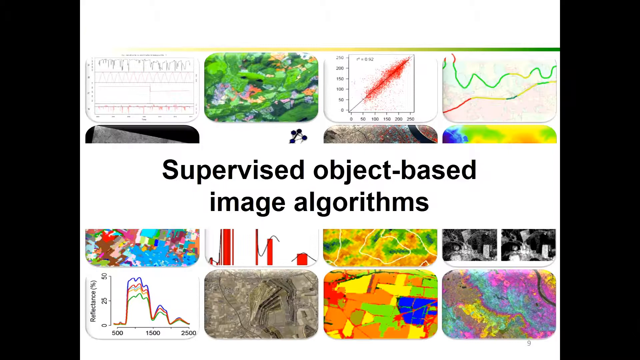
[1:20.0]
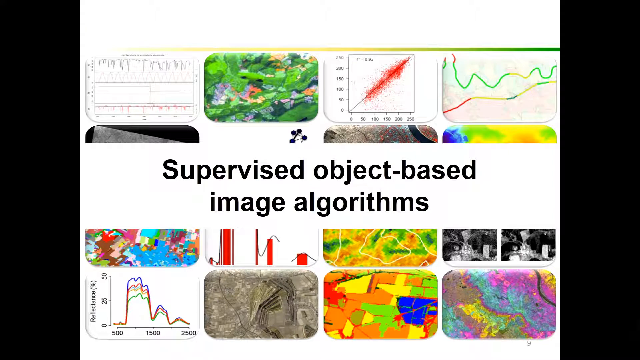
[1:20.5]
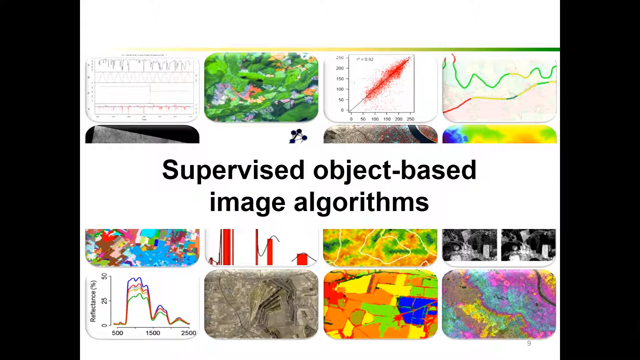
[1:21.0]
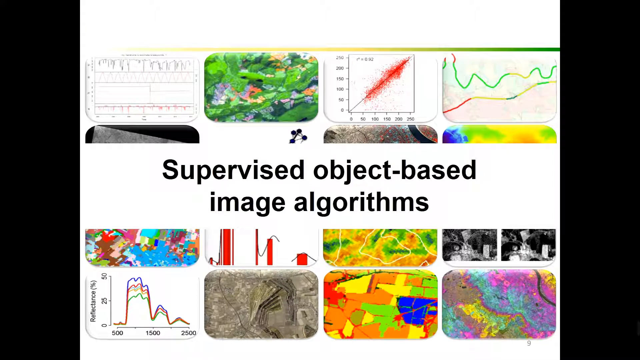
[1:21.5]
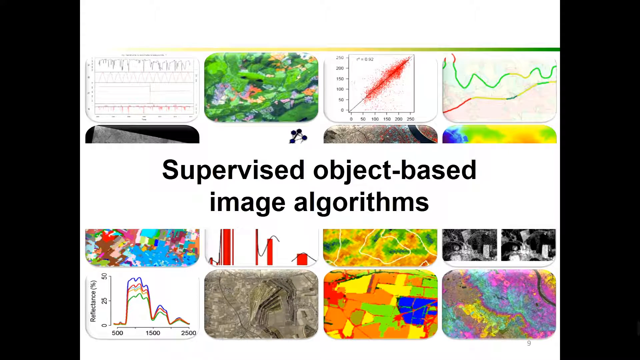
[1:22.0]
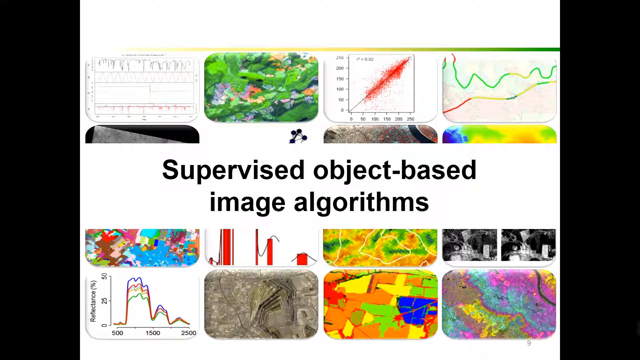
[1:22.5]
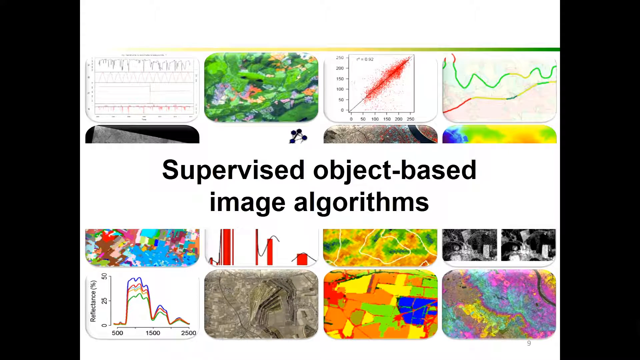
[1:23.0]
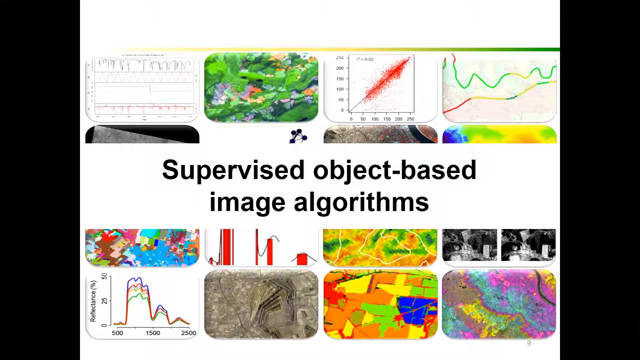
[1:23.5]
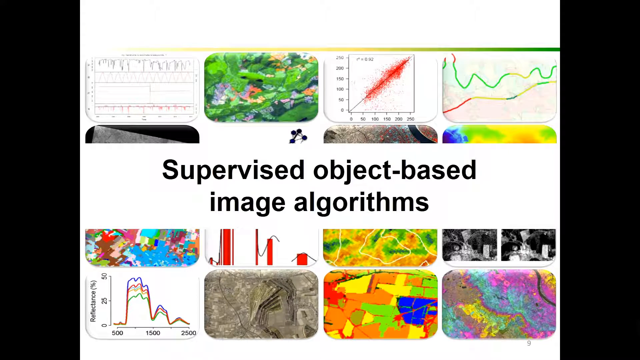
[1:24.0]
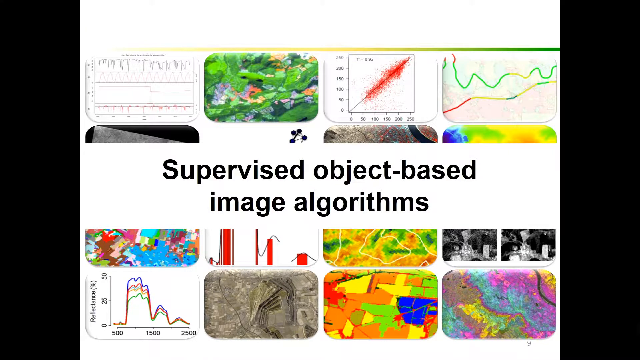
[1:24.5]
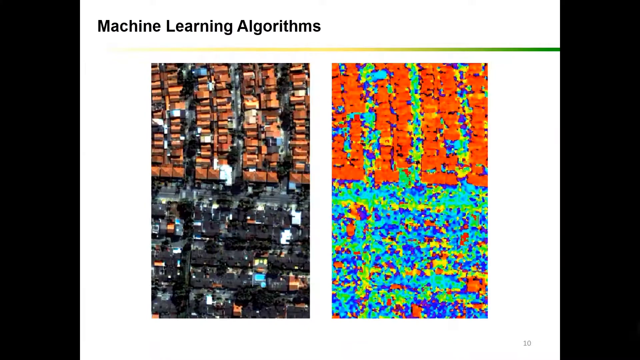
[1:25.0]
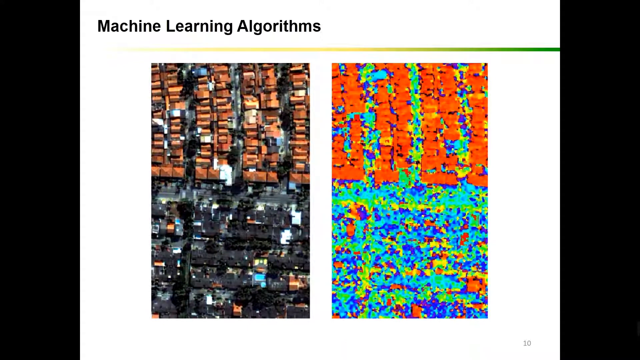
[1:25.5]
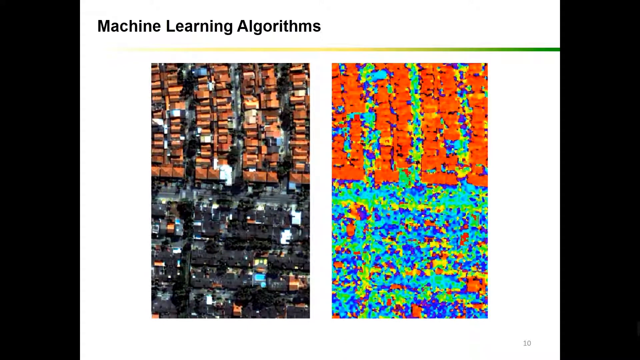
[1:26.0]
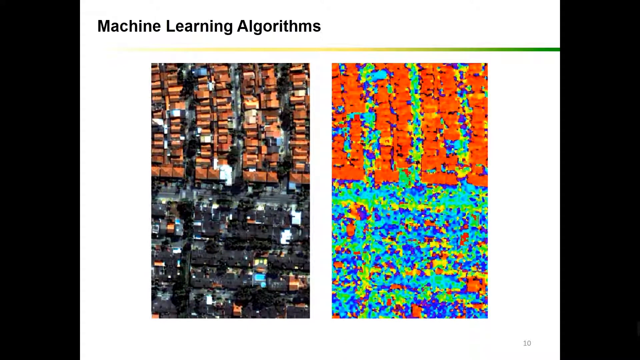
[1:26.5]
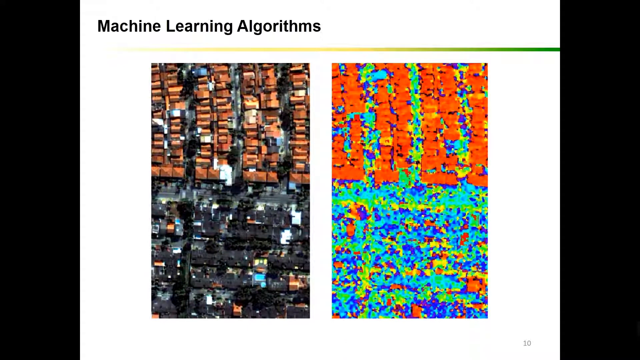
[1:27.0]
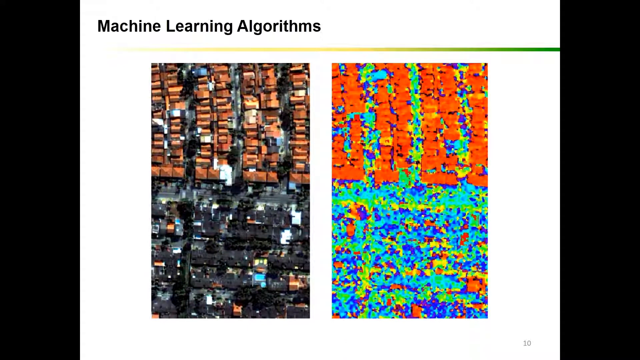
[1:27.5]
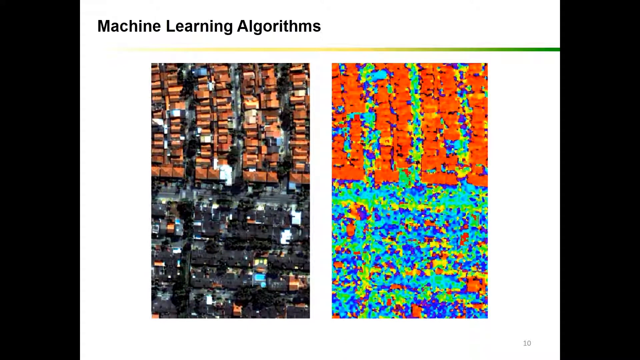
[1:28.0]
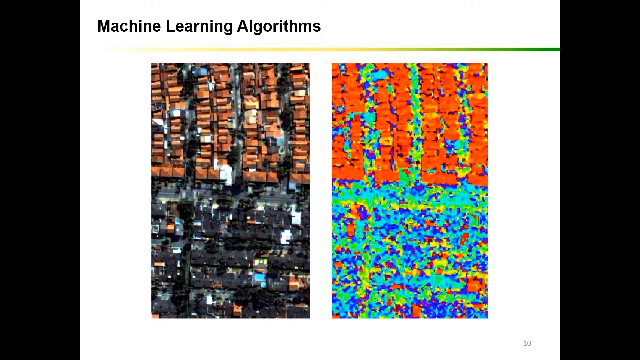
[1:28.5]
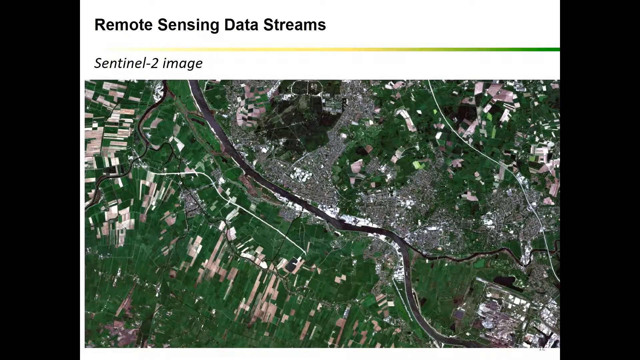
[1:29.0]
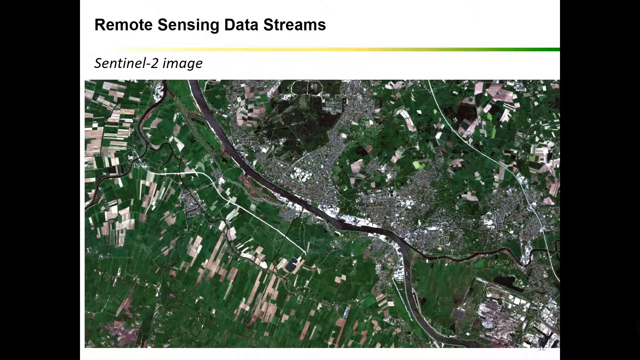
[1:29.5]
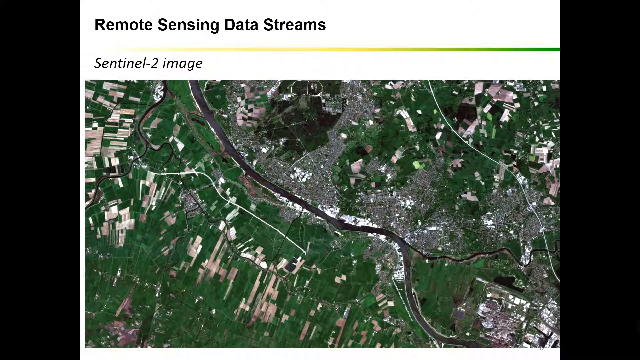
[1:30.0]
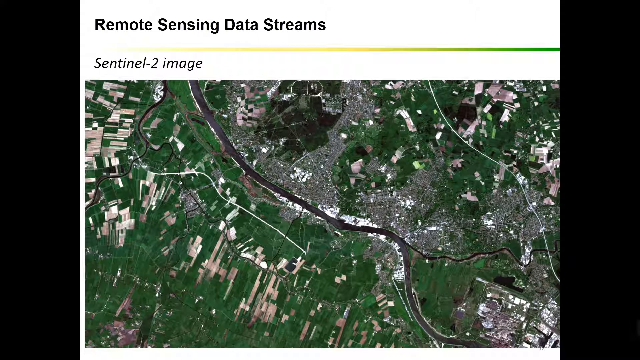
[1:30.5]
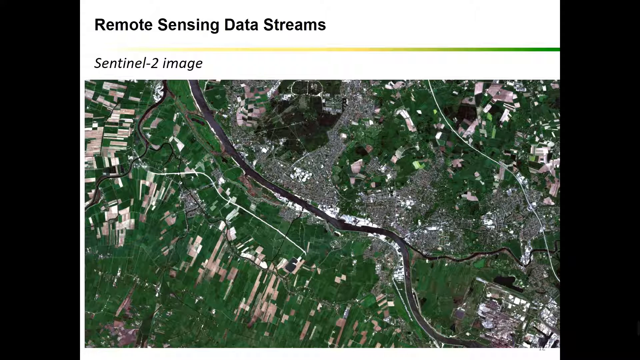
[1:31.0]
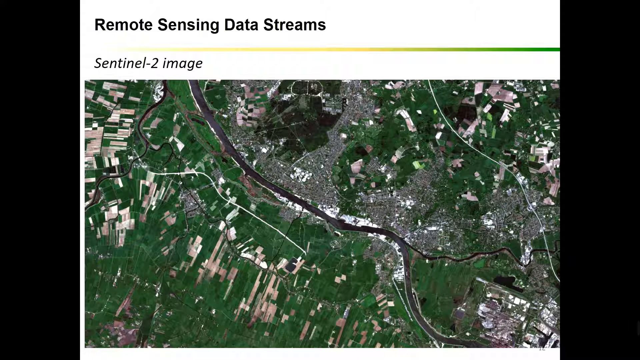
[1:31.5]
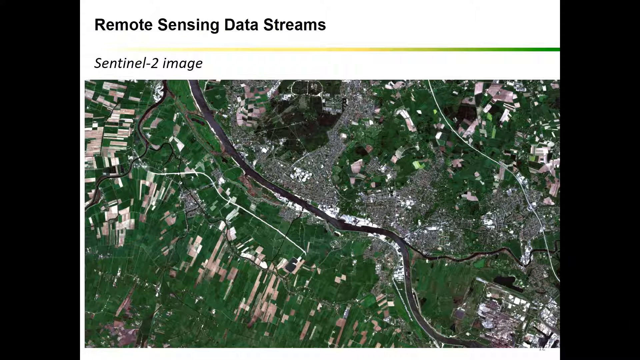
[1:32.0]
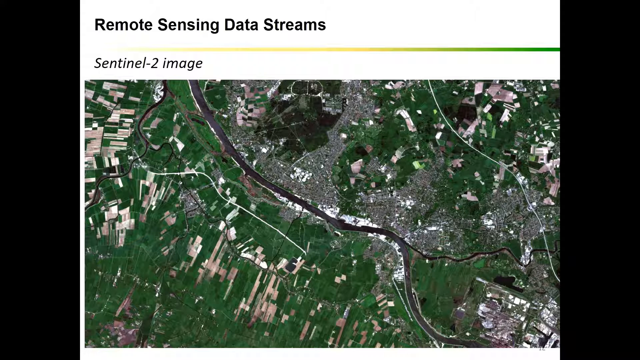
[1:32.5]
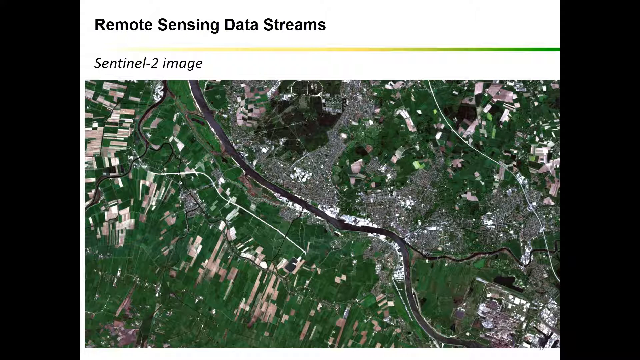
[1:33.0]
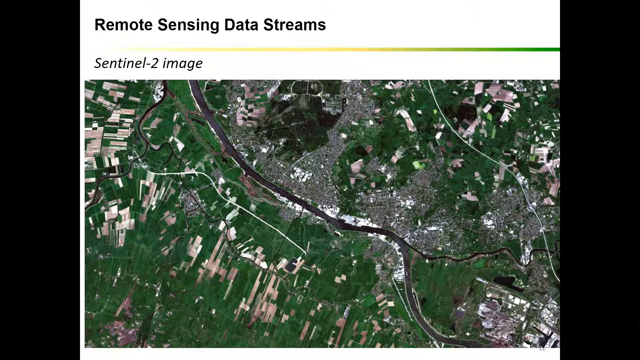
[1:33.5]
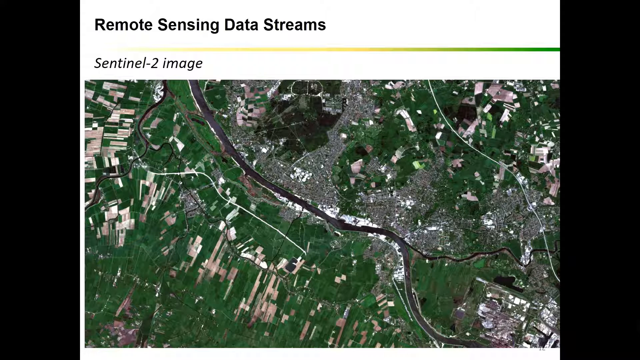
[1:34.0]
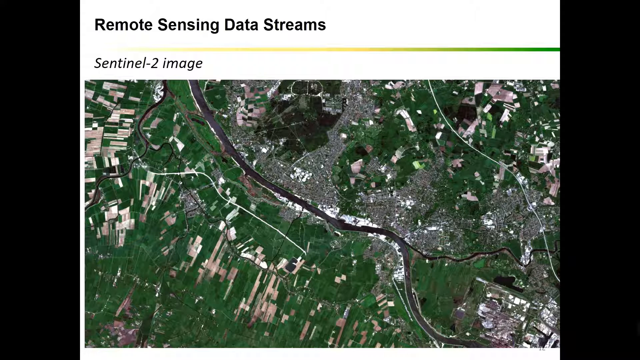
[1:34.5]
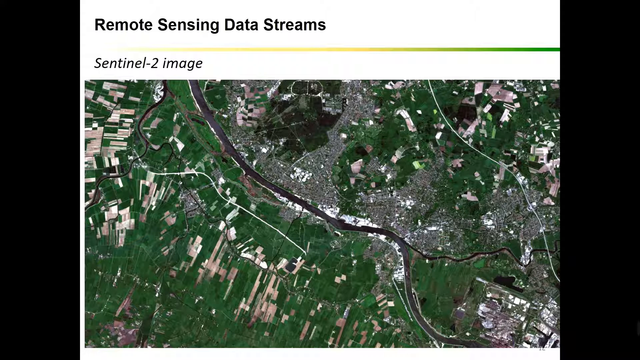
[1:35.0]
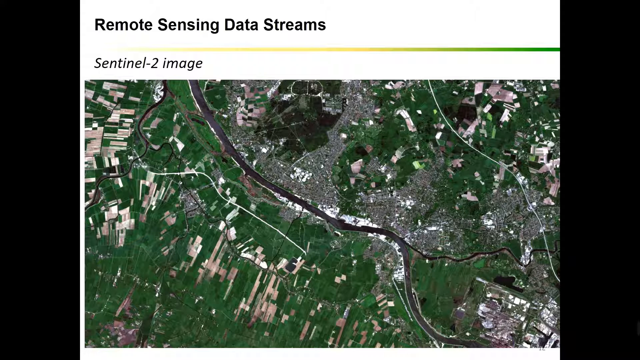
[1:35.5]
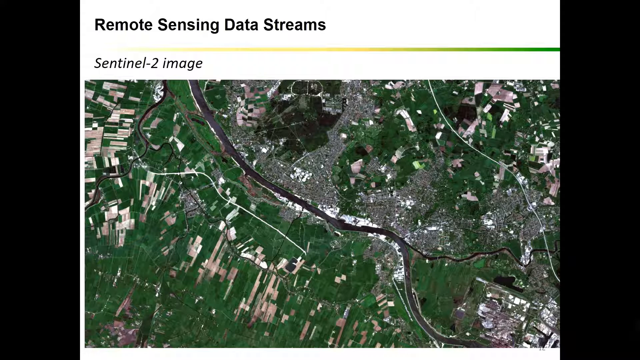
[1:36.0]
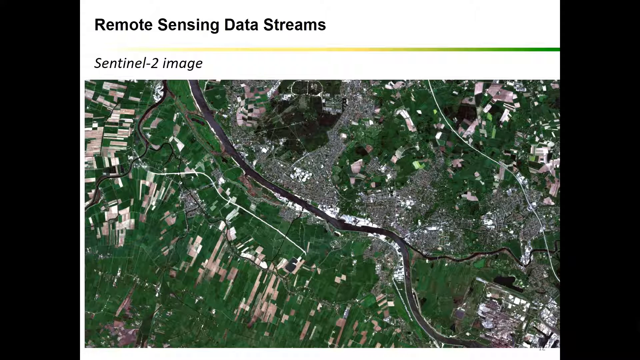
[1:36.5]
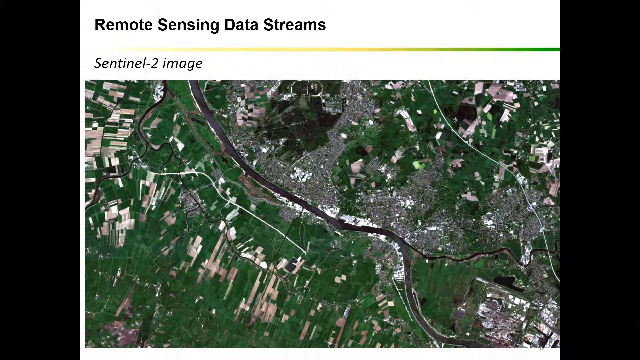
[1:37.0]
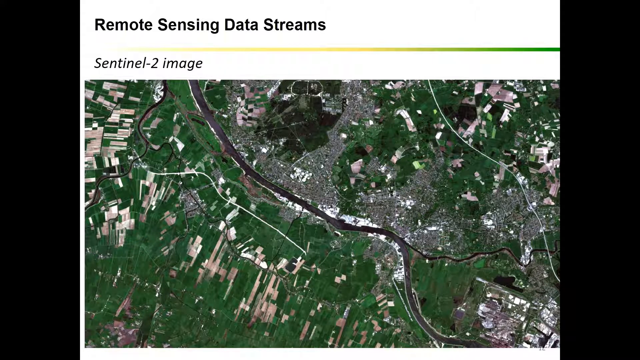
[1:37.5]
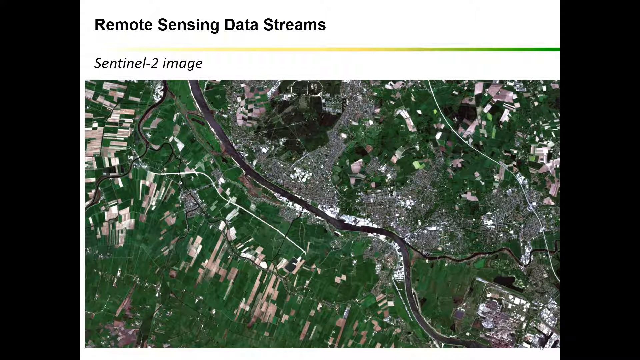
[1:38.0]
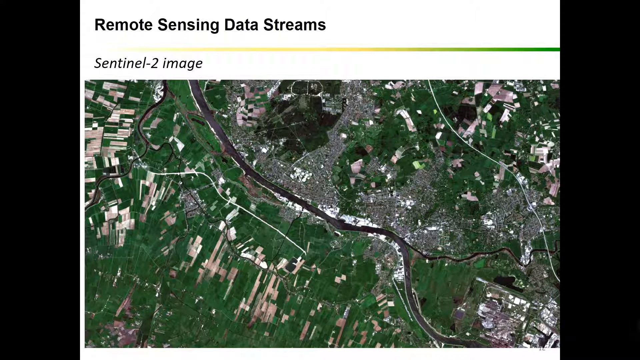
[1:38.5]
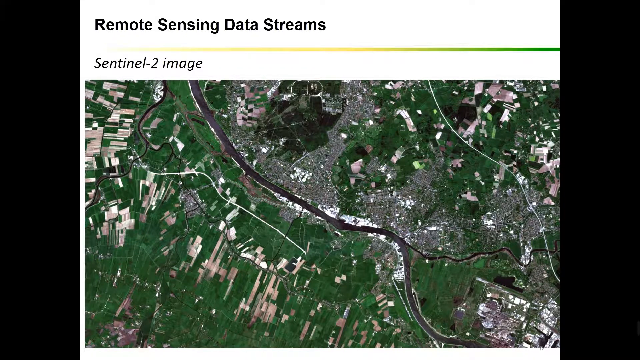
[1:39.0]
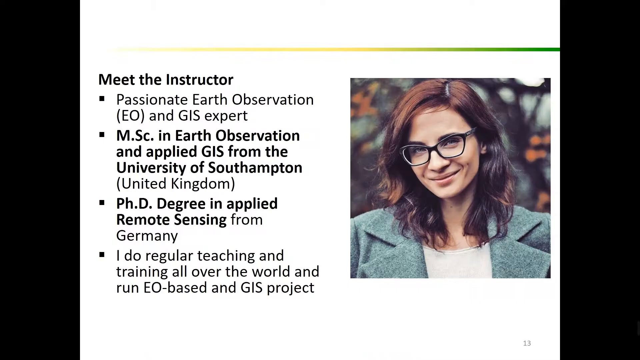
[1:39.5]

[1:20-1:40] The video continues with supervised object-based image algorithms. A housing development is shown in a photograph like Google Earth, and right next to it is presumably the same housing development as a colored map in which things appear as colors and pixels rather than as a picture. At the top it says "machine learning algorithms," perhaps showing how the machine color codes each thing on the ground in the photographic image on the left. The video then goes to an aerial view pulled far back with lots of green, a waterway, some roads, tributaries off the main waterway, and what looks like possibly tiny towns or habitations; at the top it says "remote sensing data streams" and "Sentinel-2 image." The video then briefly shows a picture of the course instructor, a young woman with glasses and a pretty smile, with information about her qualifications for teaching the course.